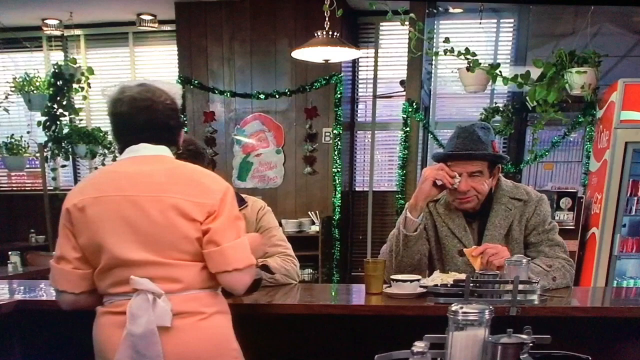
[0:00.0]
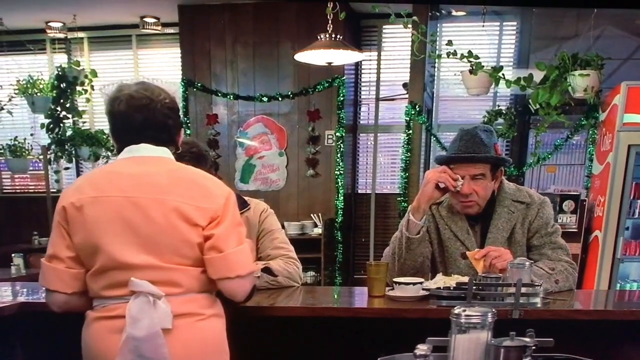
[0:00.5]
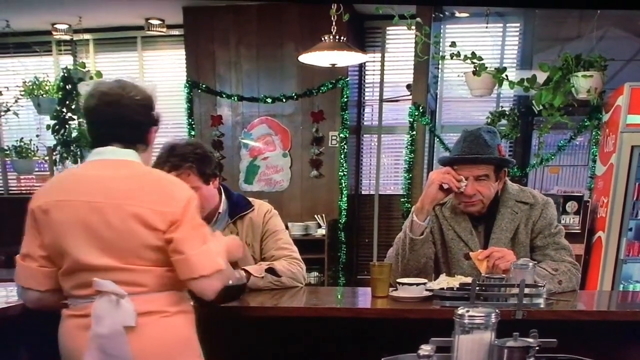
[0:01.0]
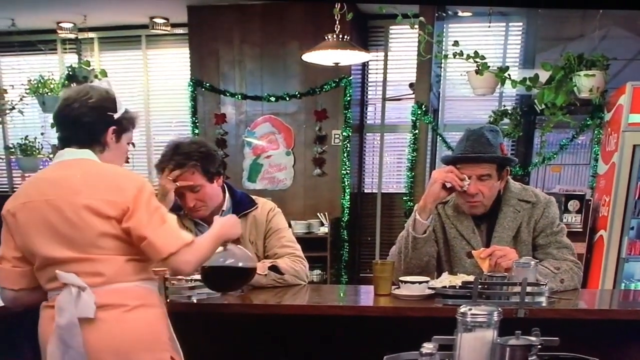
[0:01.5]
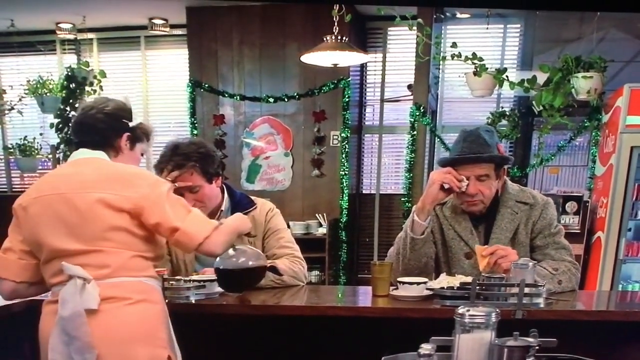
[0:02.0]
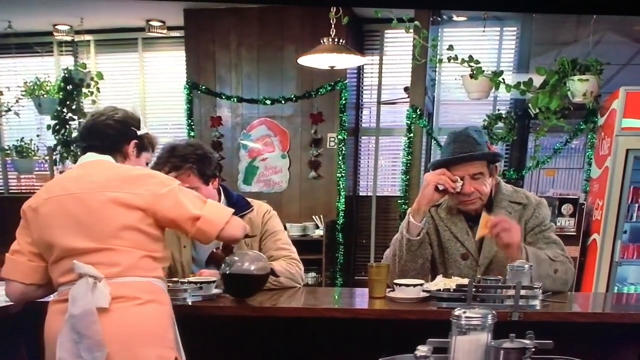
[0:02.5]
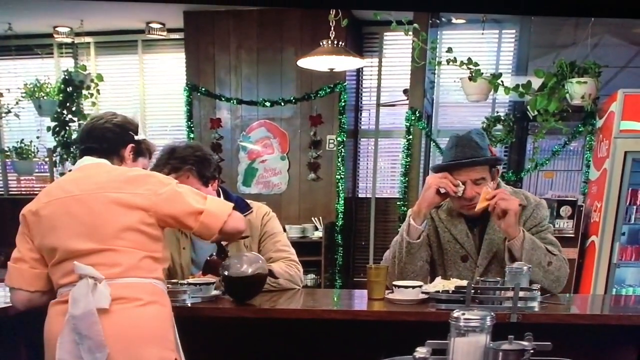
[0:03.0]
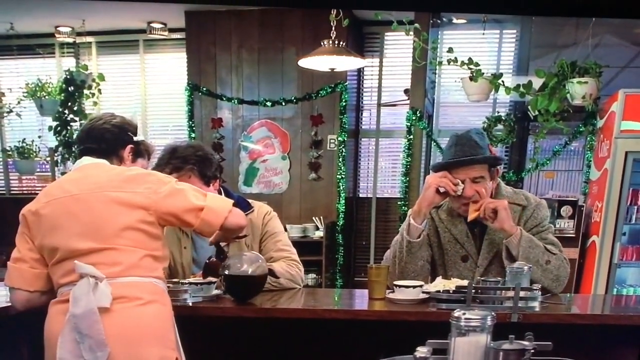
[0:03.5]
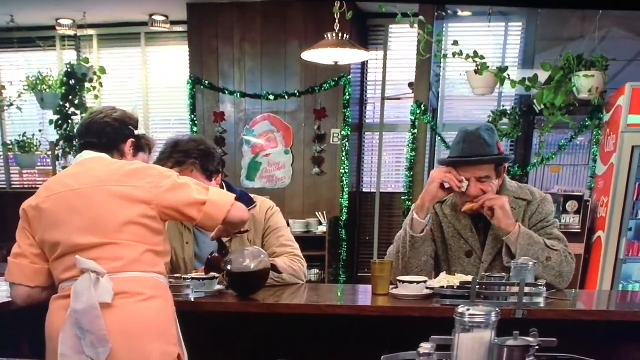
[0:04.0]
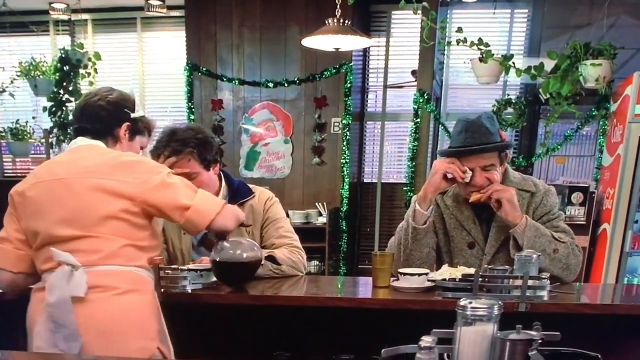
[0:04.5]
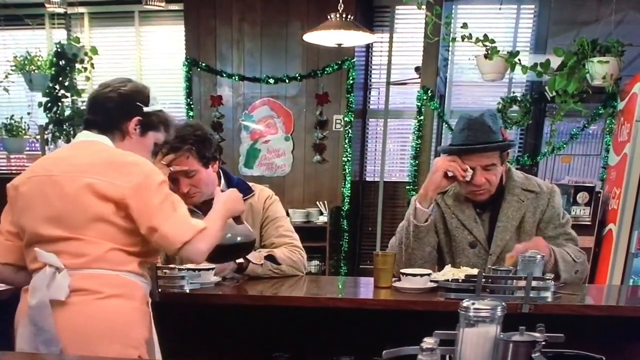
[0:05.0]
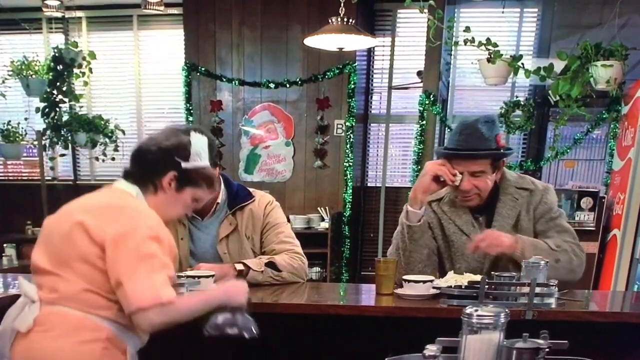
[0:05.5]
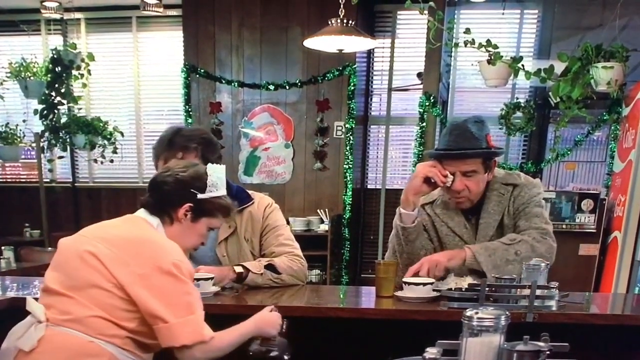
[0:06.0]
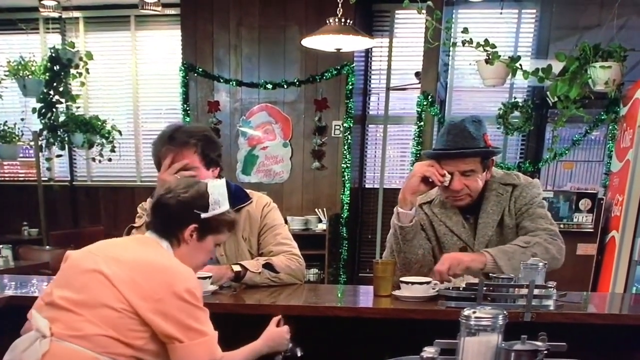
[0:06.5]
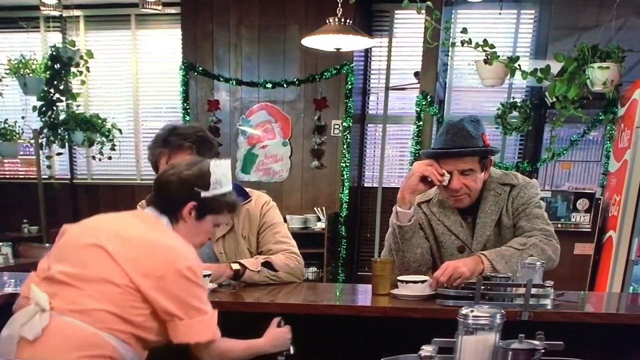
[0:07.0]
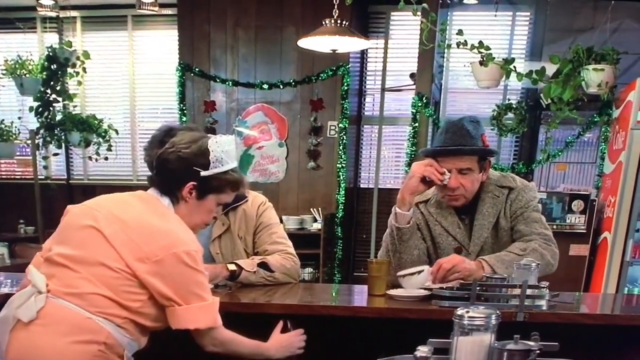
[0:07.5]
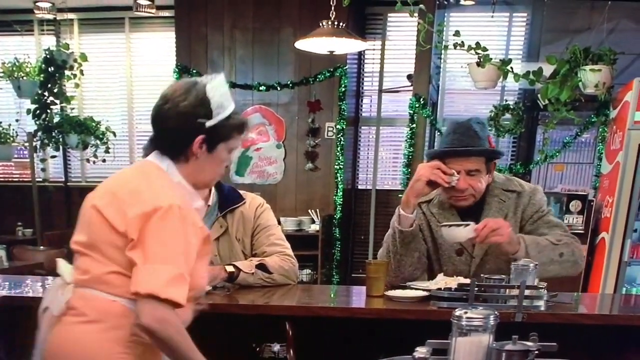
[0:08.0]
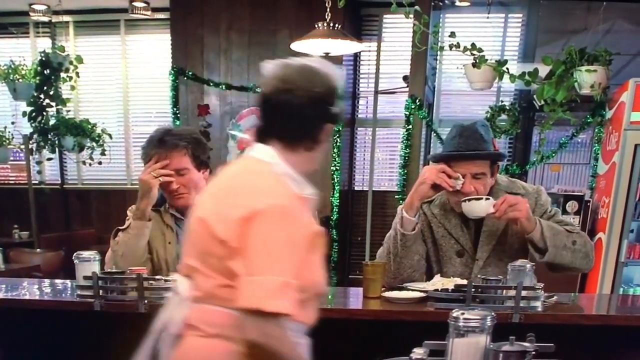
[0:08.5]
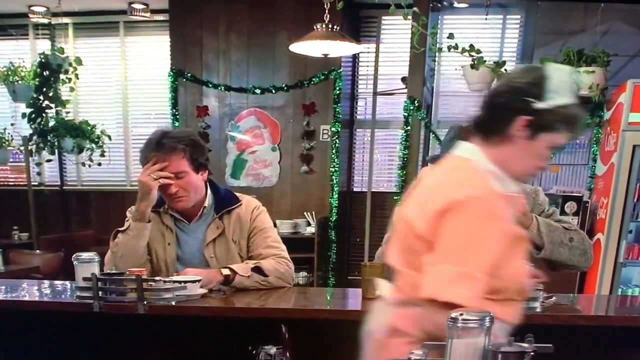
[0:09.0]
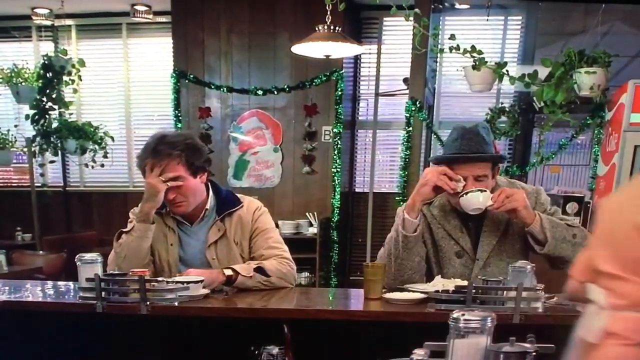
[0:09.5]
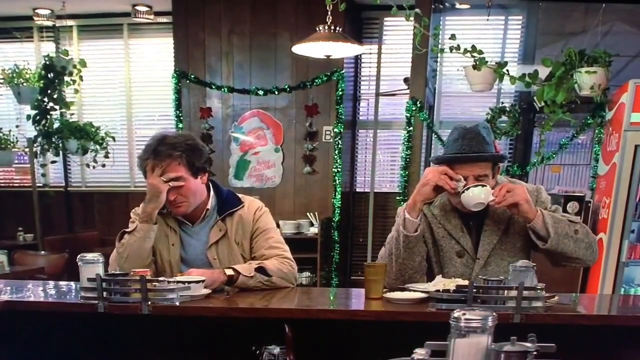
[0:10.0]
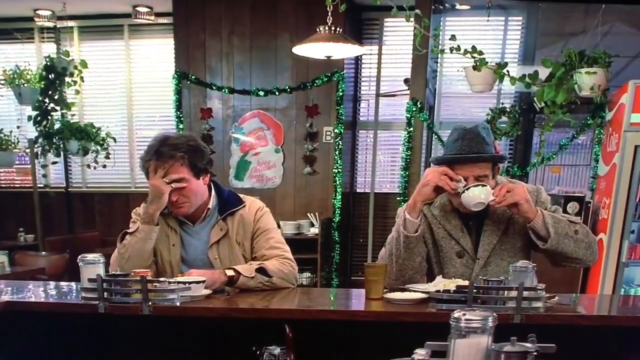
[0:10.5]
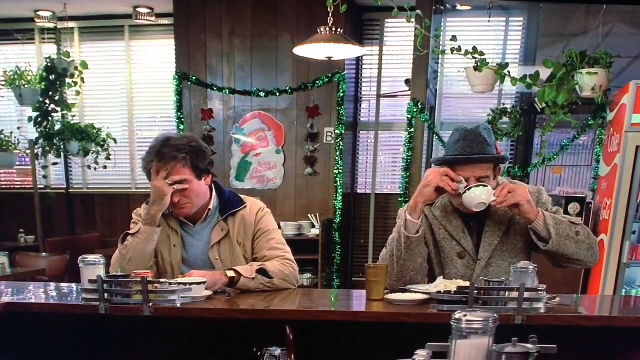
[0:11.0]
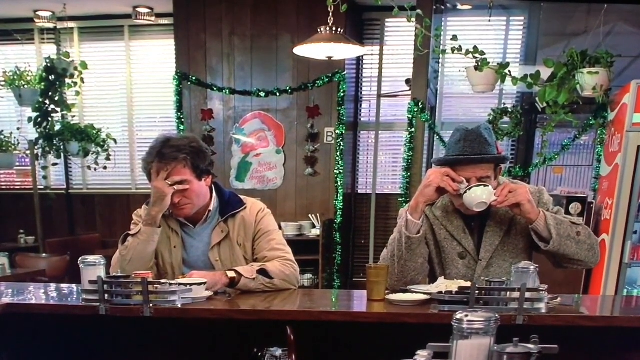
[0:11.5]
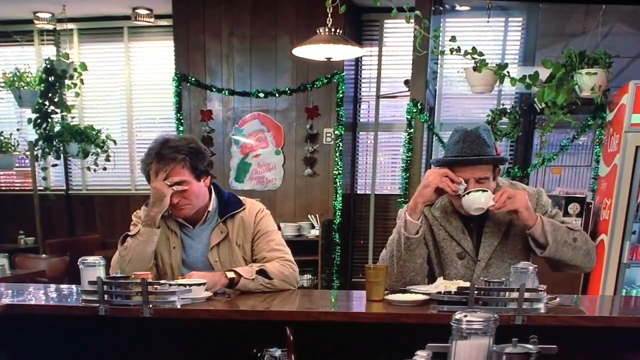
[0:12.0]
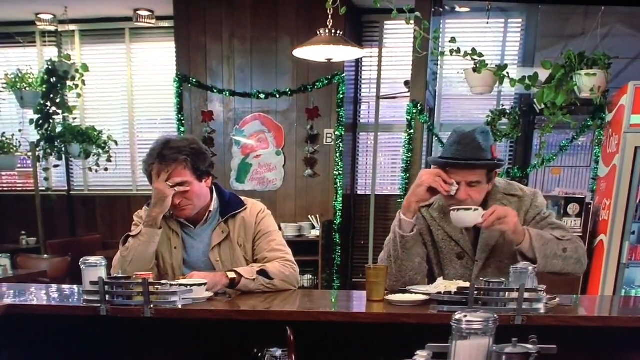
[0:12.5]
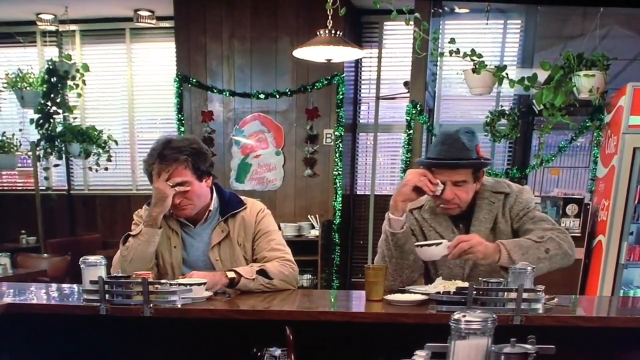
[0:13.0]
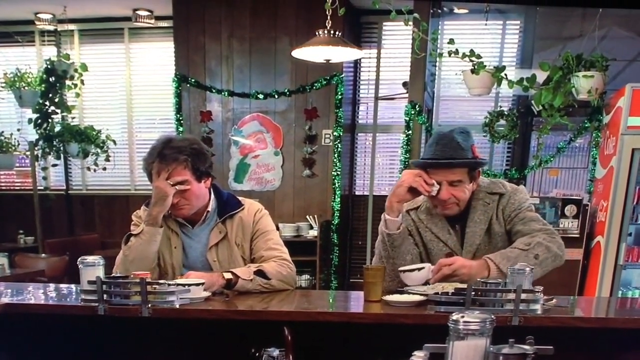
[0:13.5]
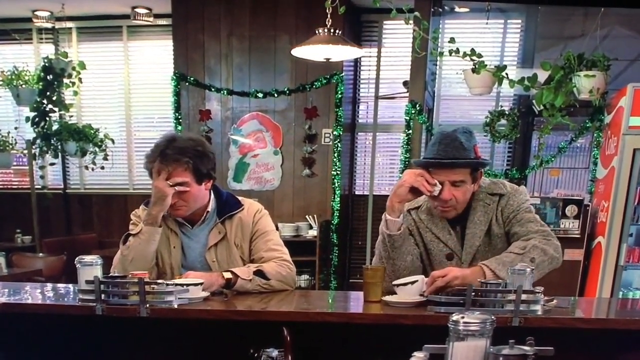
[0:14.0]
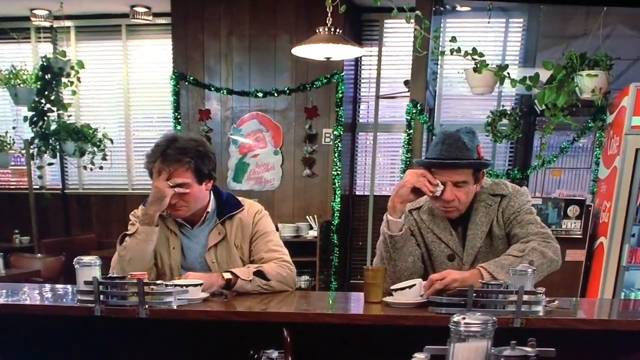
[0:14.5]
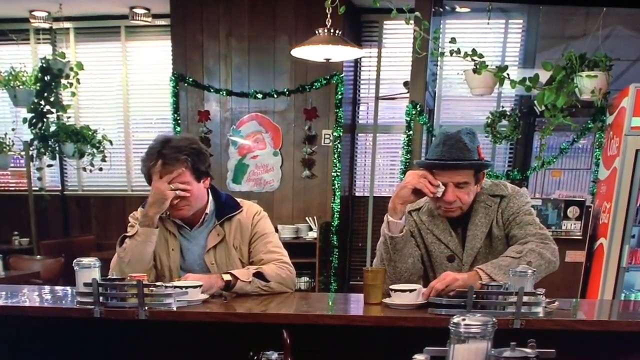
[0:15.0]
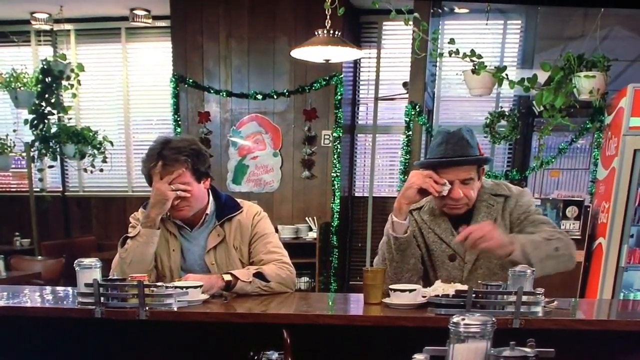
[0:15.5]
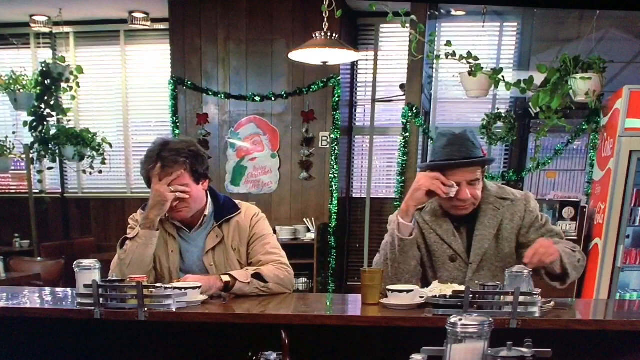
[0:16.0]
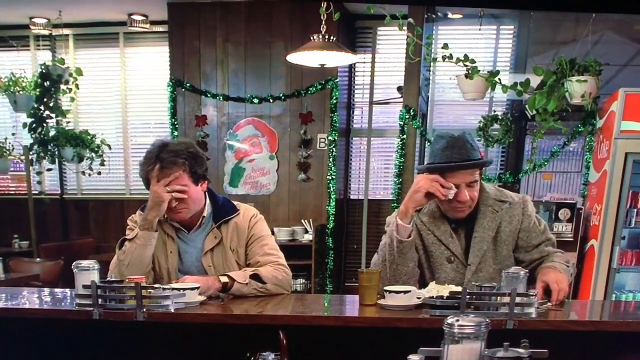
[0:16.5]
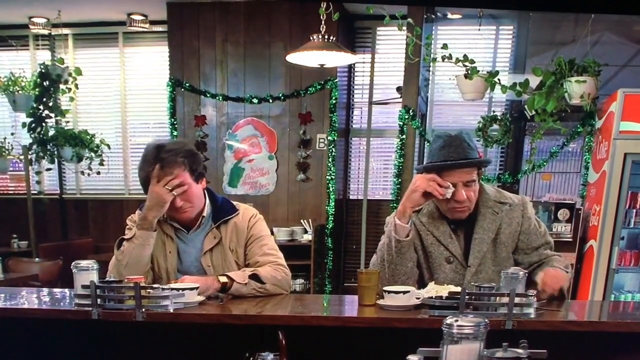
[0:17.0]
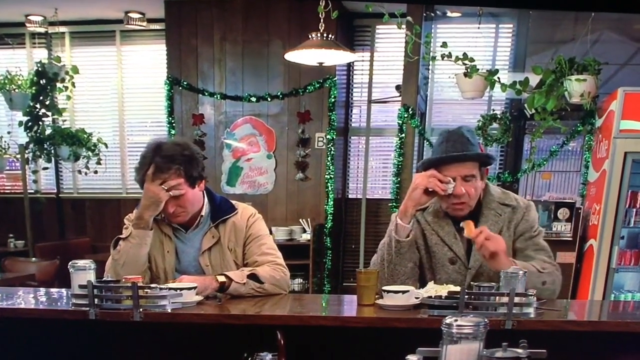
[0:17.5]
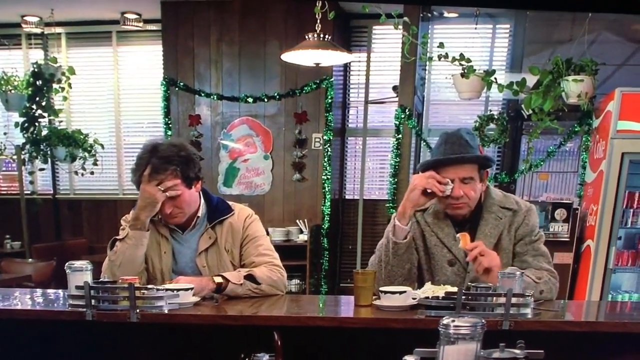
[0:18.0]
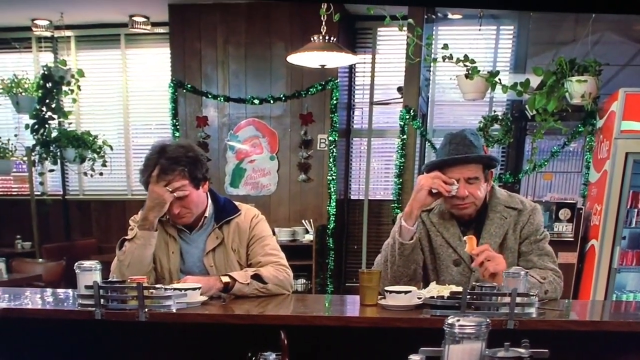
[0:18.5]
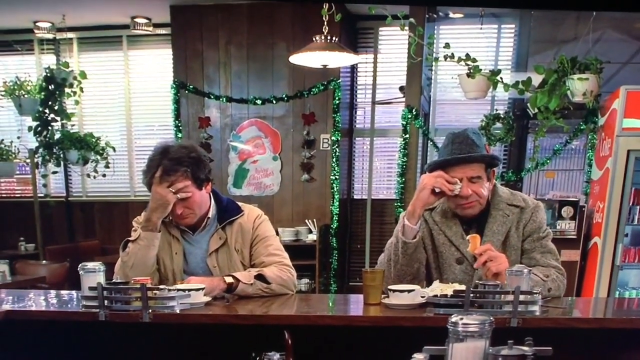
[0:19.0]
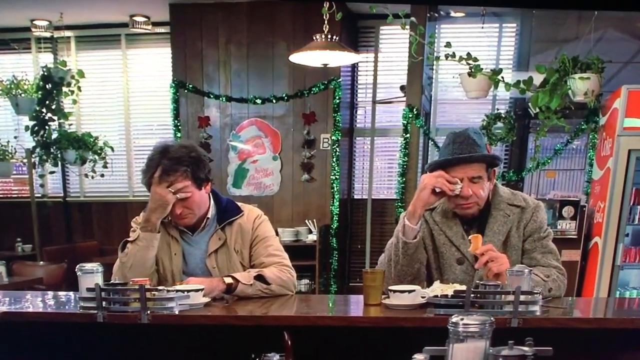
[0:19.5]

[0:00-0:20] A wide shot shows three people. The first person seen is a waitress in a bright orange uniform pouring some coffee. Once she leaves the camera view, two men are visible in a very similar situation: they seem to be hungover and recovering from the night before, having their morning coffee and breakfast. In the background there are lots of Christmas decorations and greenery. It is a single shot focused mostly on the people, who are not doing much. They are holding their faces: one holds his forehead, and one holds a tissue onto his forehead. Both are apparently supposed to be eating, but one man is not eating while the other drinks his coffee. There is no text.